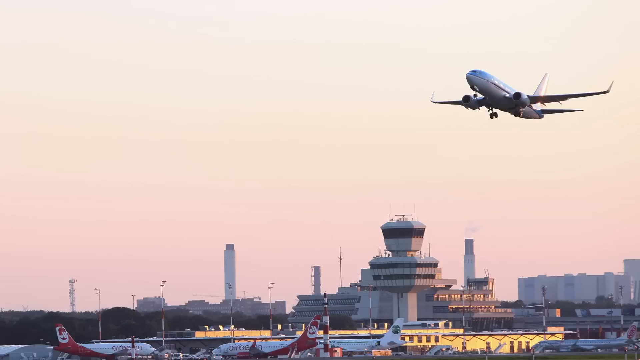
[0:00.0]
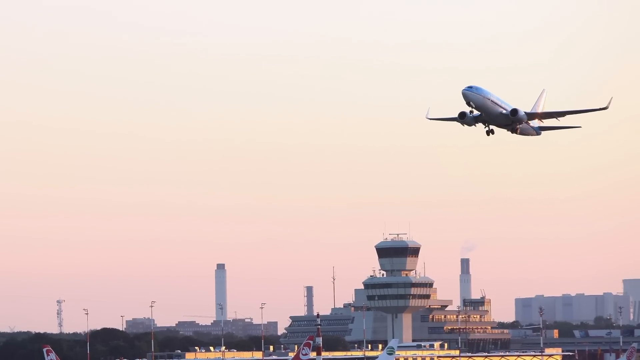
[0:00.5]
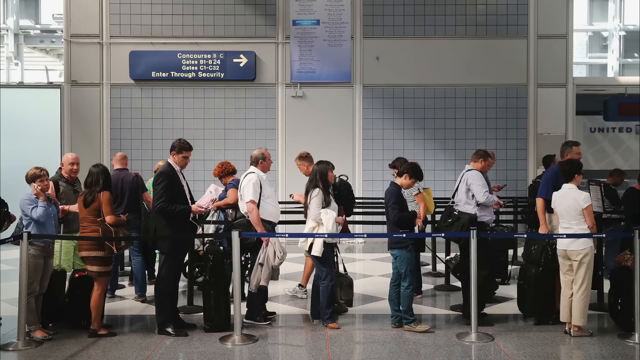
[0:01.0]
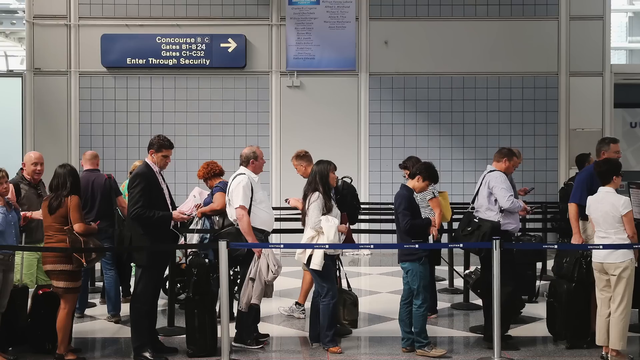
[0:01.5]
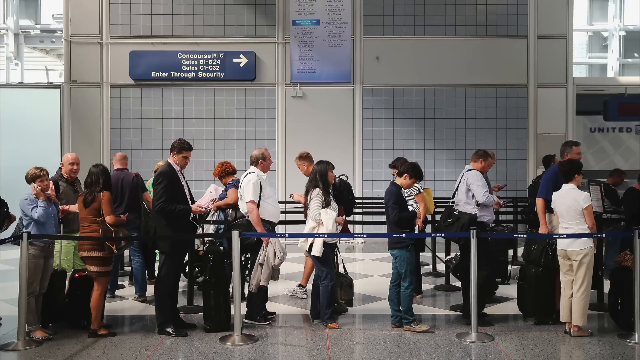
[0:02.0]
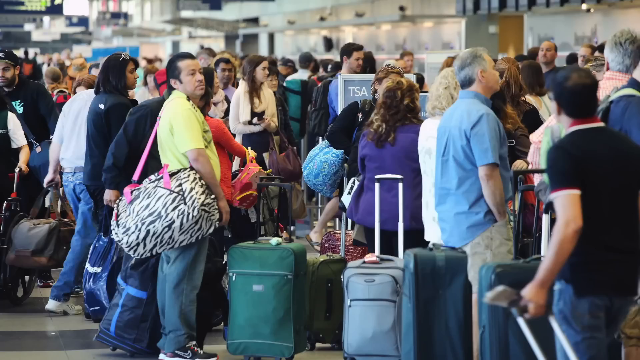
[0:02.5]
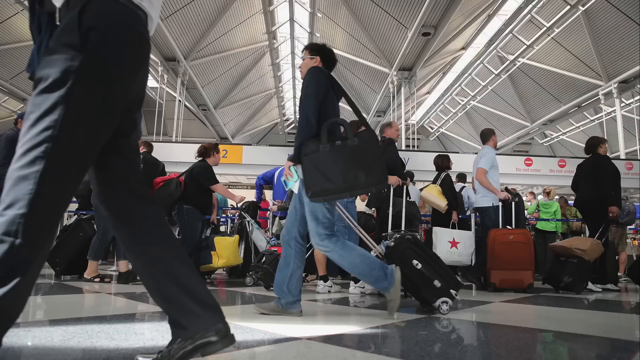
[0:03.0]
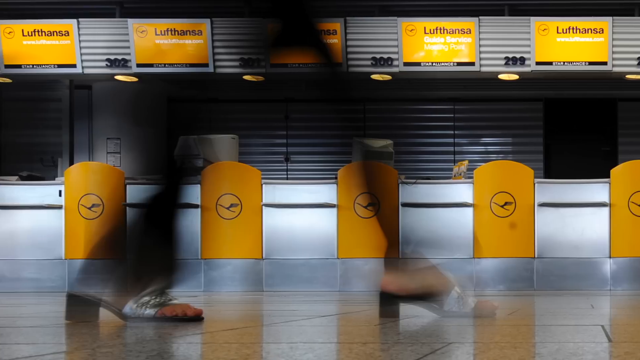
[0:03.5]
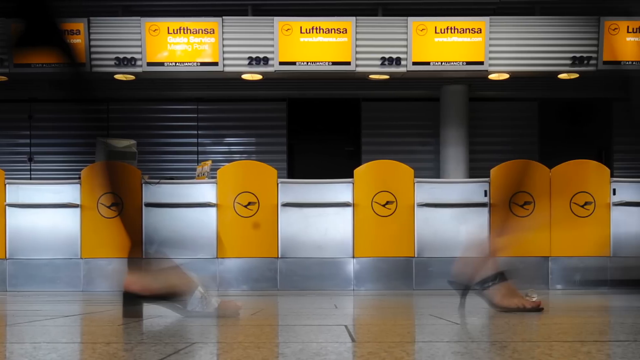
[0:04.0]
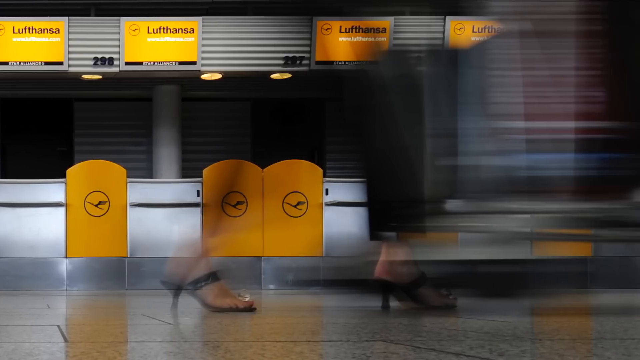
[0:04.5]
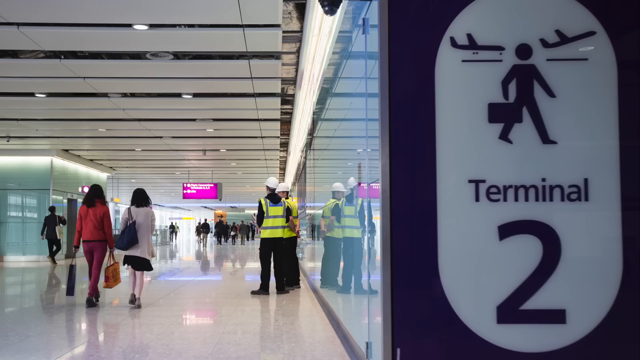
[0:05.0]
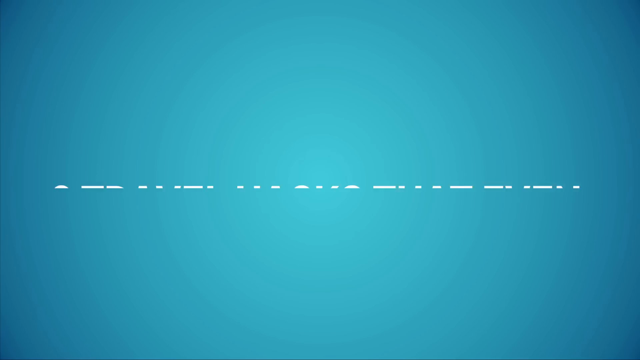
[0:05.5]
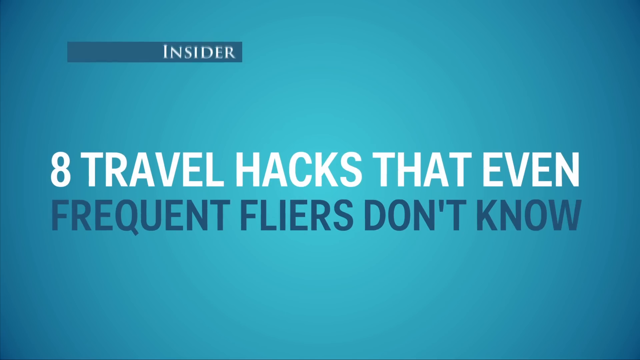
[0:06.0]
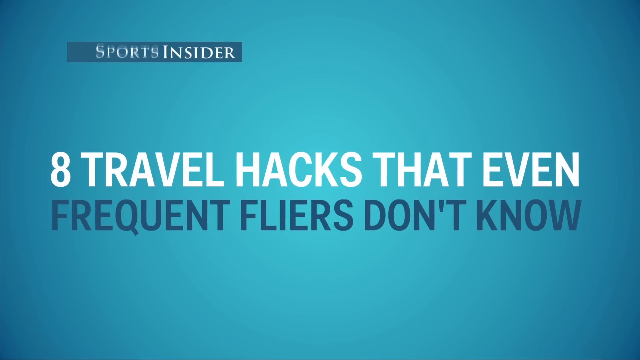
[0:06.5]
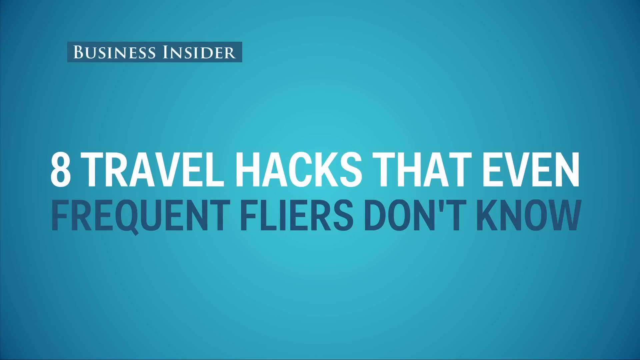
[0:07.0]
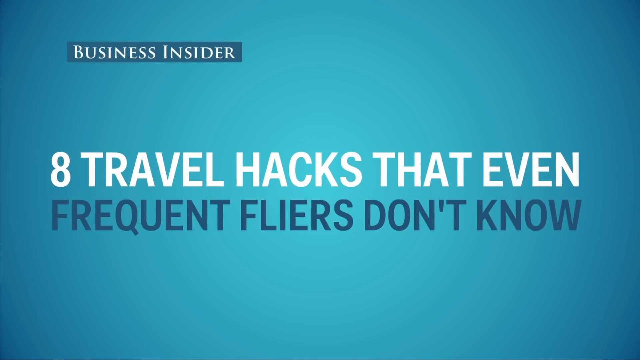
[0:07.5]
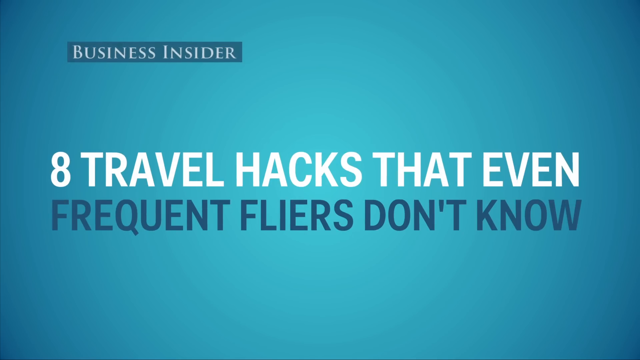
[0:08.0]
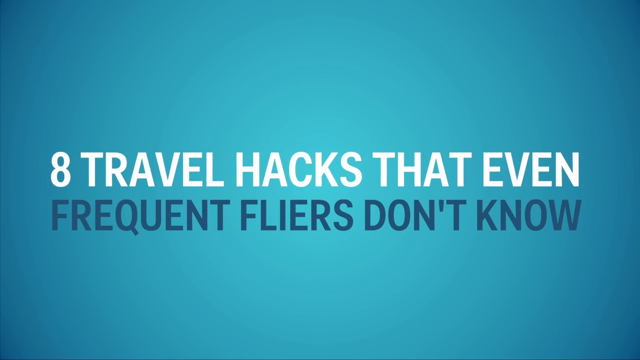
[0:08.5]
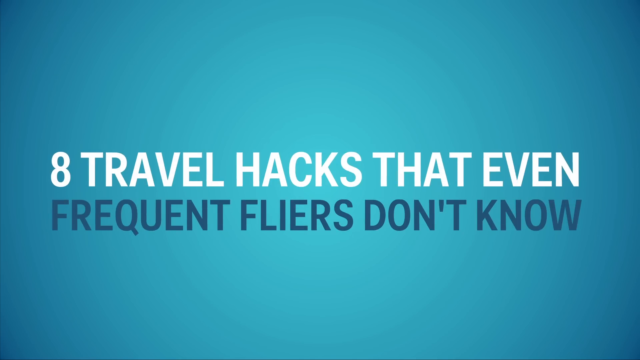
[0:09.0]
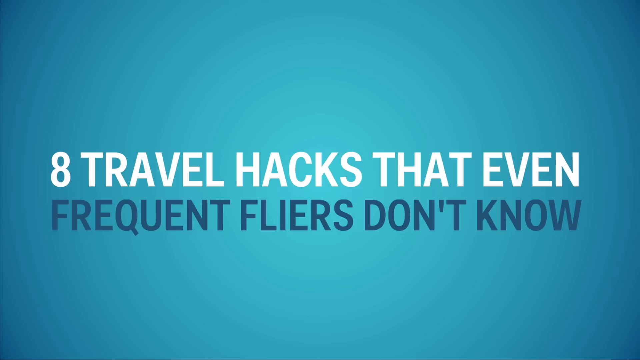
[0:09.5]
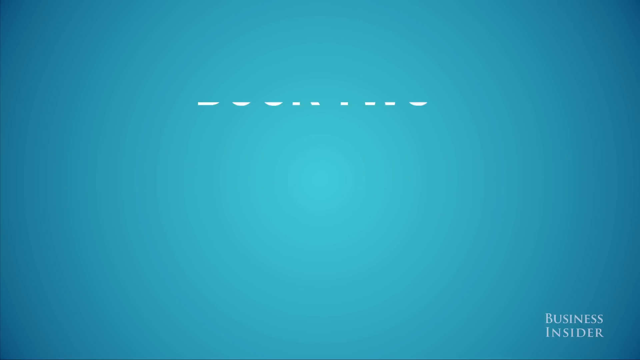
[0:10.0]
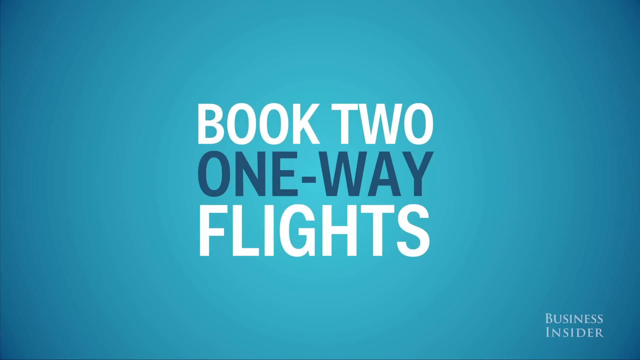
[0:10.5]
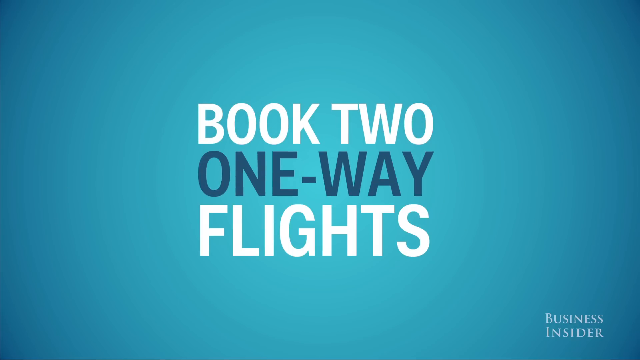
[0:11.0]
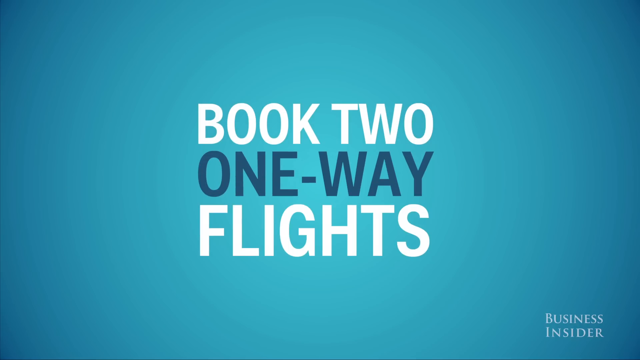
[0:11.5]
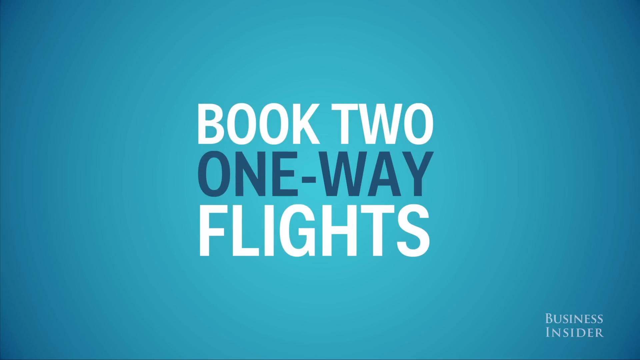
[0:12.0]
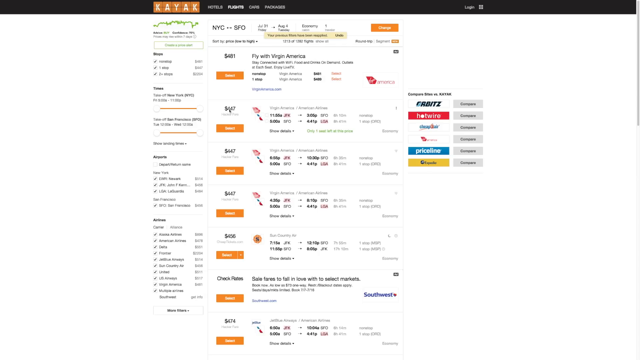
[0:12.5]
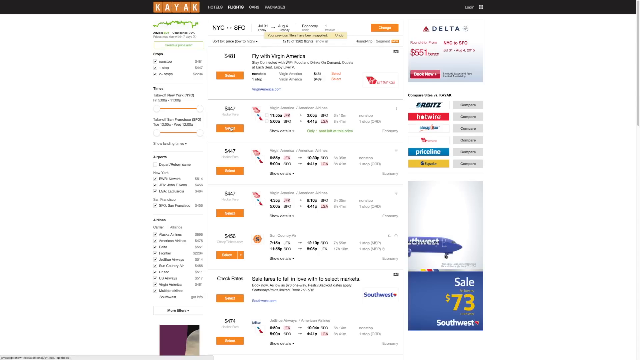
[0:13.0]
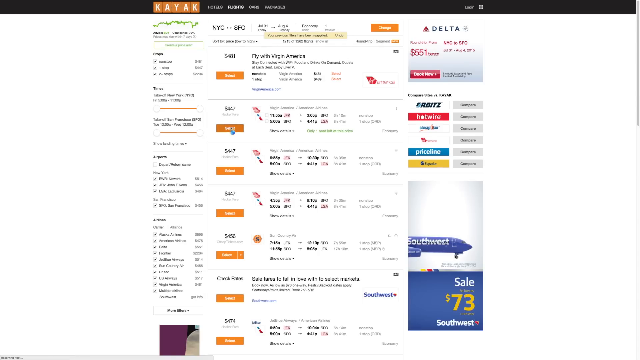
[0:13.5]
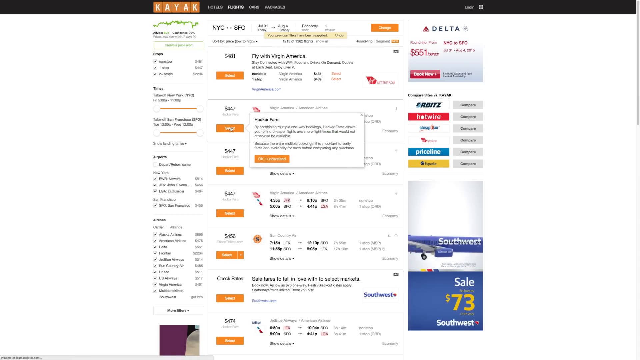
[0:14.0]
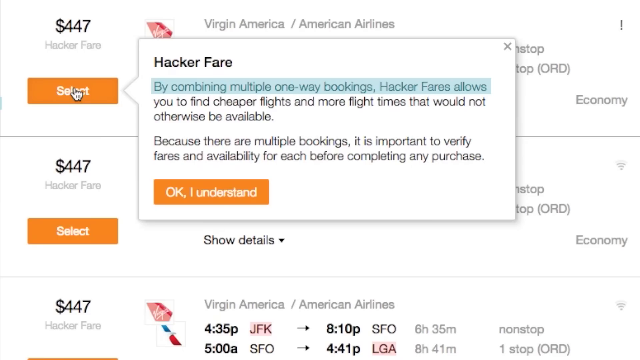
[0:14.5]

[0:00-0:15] An airplane appears, along with people standing in lines and many people in an airport. A person is shown, and text reads "eight frequent travel hacks that even frequent flyers don't know" and "two one-way flights." Pictures and video of flights follow: an airplane in the air, people standing in lines, and a camera panning. "Business insider" appears on a blue screen. There is a picture of many flights, a plane in the air, pictures of people in a queue, and a picture of people who are airport workers. A picture of Southwest Airlines and a picture of an airport appear. Video shows people walking in the airport, including two people wearing yellow vests. A Kayak video shows "hacker fare." People hold bags in an airport line, and workers are in an airport. Text reads "eight travel hacks" and "book two one-way flights." A picture and video of airfares appear, people stand in a queue, a man holds a zebra-style bag, and two women walk in an airport. "Book two one-way flights," "business insider" and "BI" appear, along with Southwest Airlines and a man reading a newspaper in line.